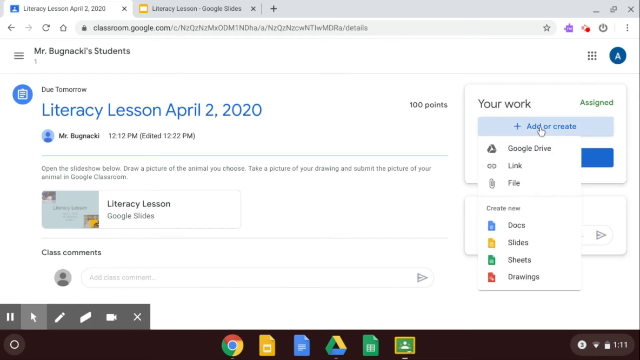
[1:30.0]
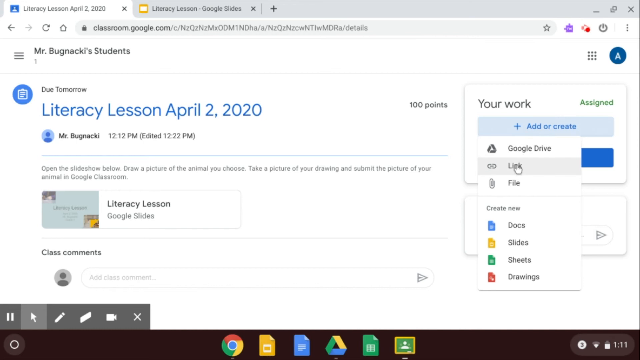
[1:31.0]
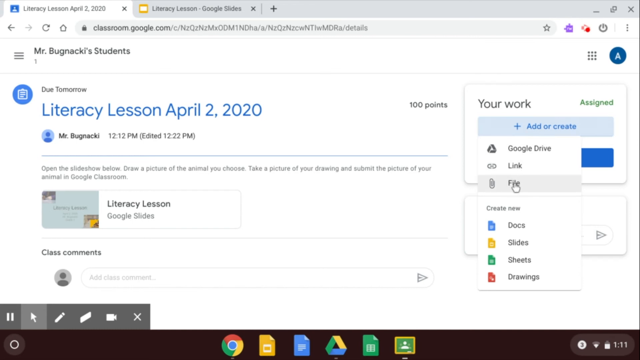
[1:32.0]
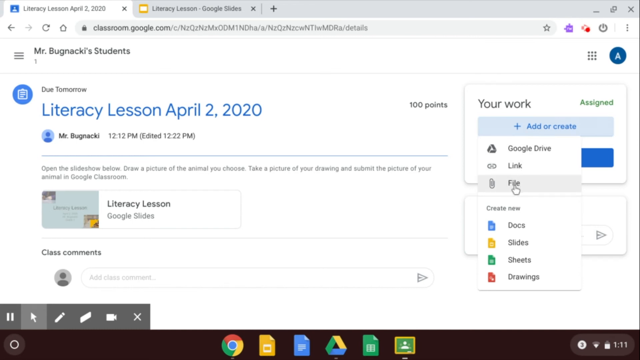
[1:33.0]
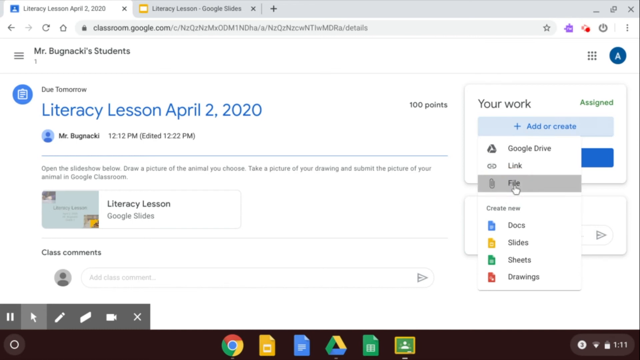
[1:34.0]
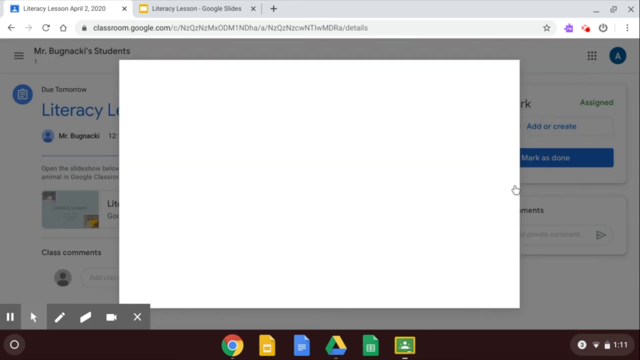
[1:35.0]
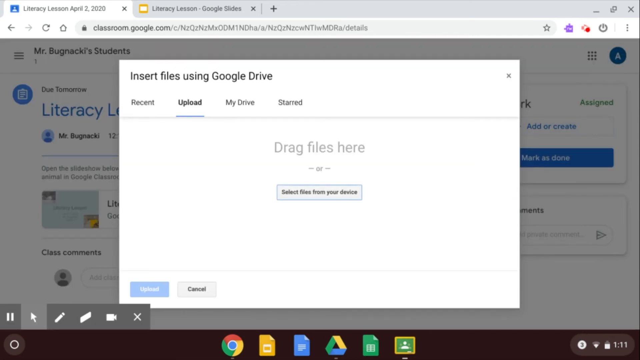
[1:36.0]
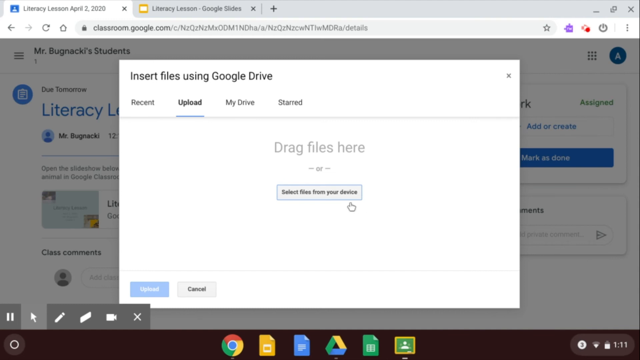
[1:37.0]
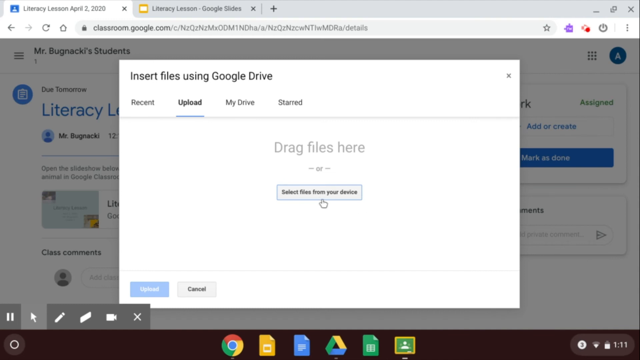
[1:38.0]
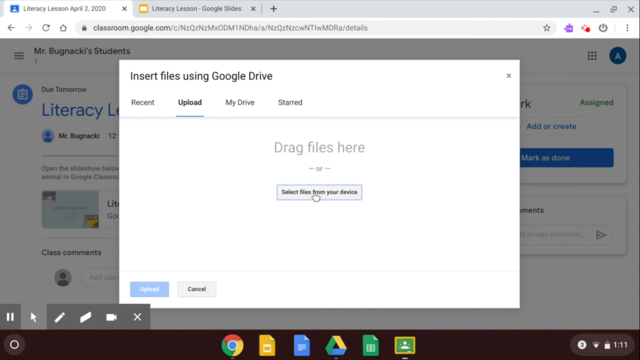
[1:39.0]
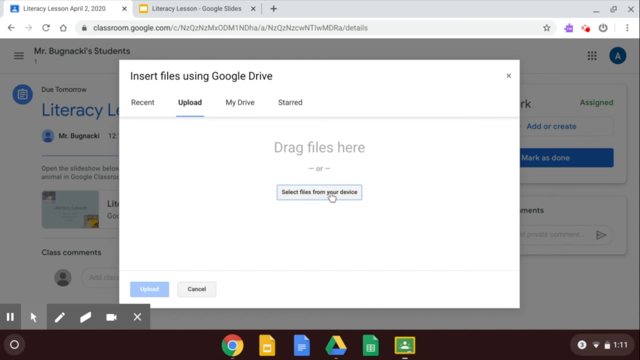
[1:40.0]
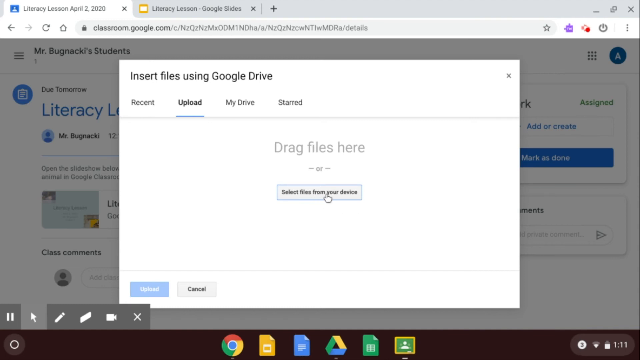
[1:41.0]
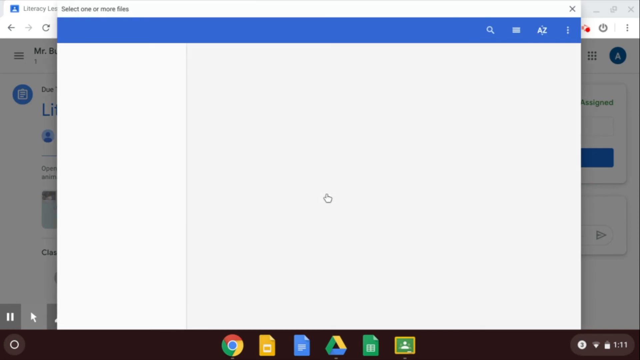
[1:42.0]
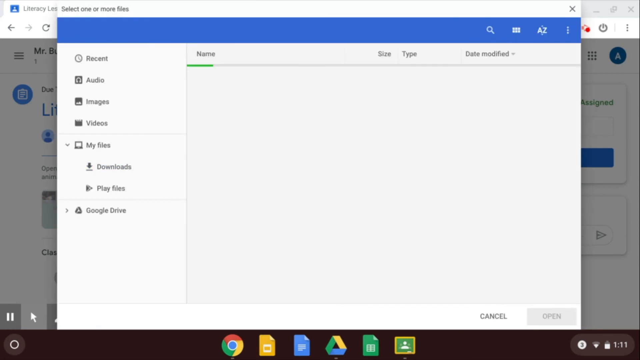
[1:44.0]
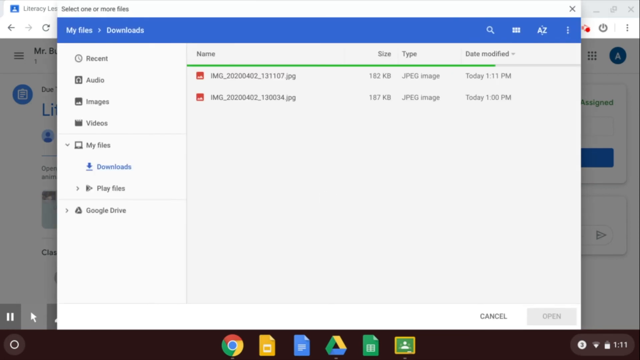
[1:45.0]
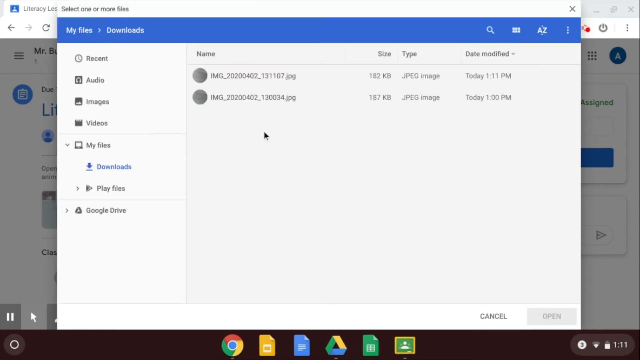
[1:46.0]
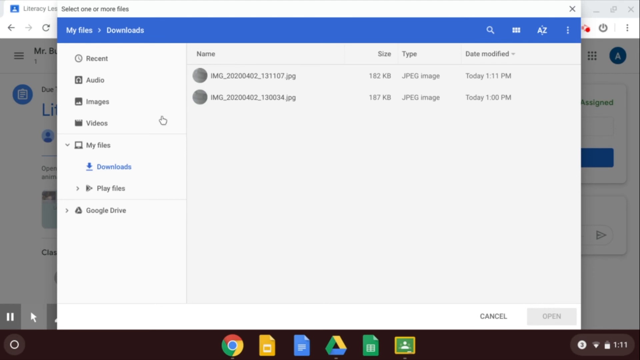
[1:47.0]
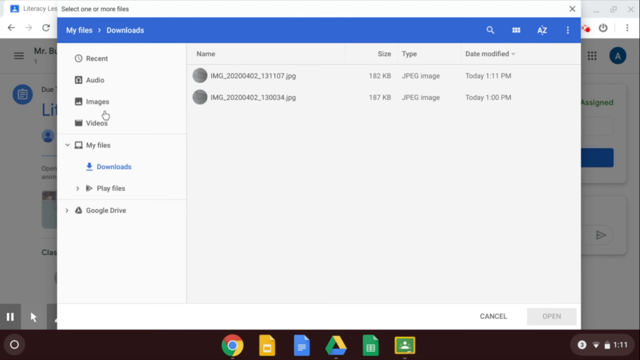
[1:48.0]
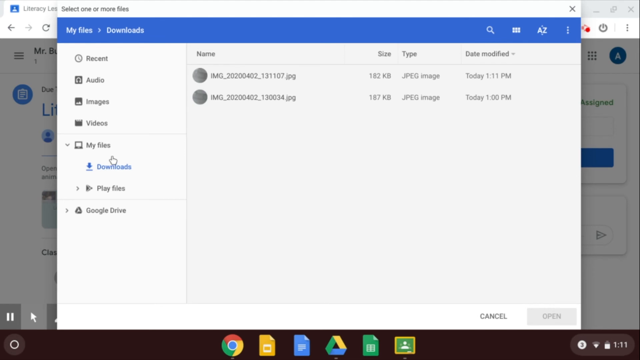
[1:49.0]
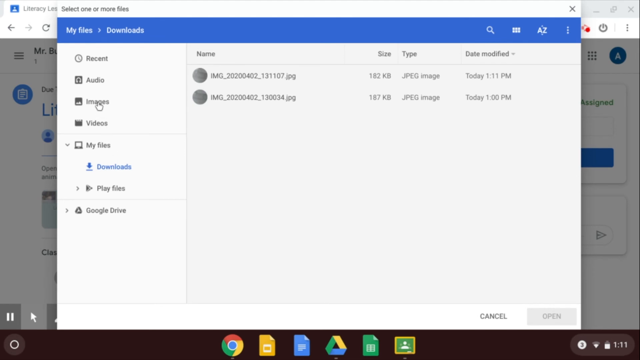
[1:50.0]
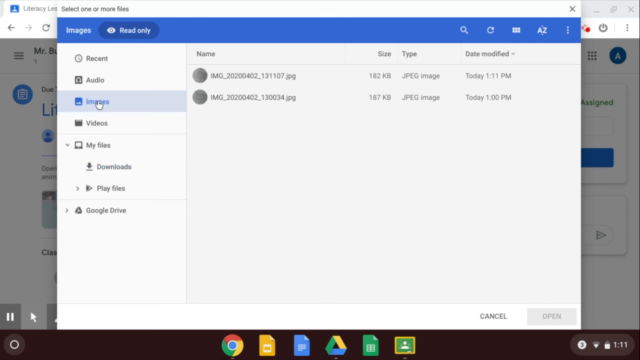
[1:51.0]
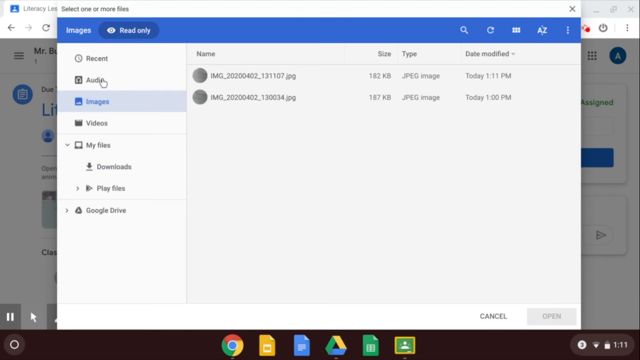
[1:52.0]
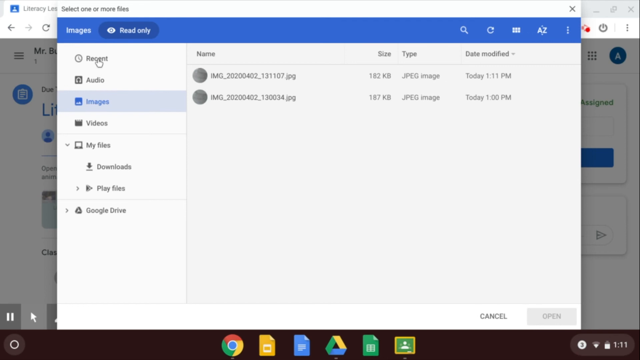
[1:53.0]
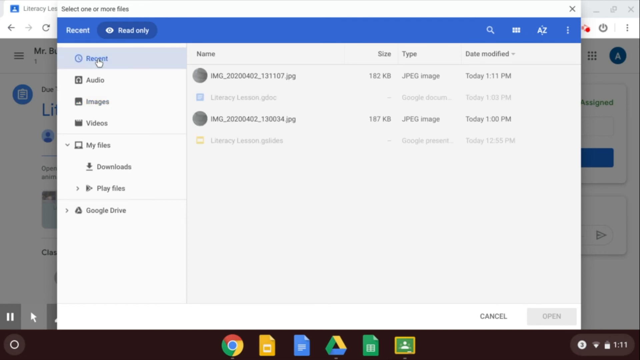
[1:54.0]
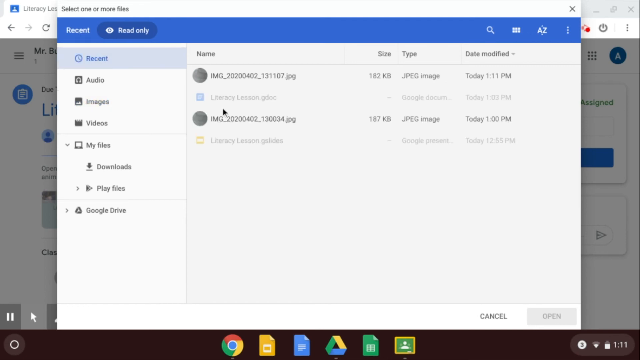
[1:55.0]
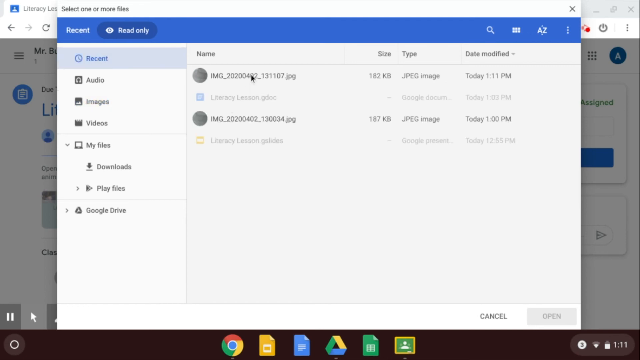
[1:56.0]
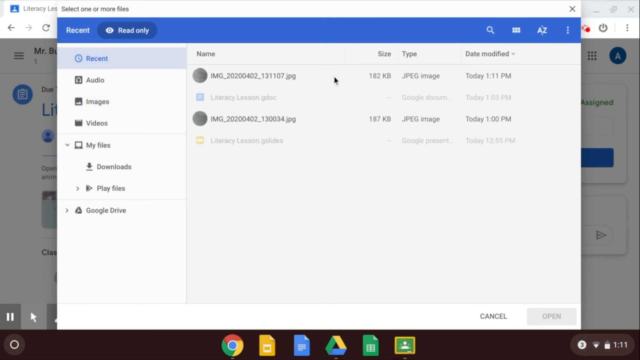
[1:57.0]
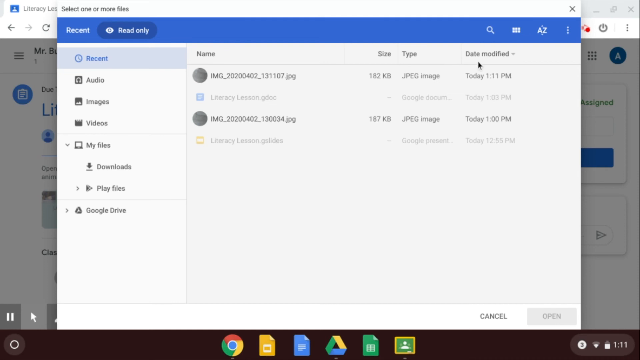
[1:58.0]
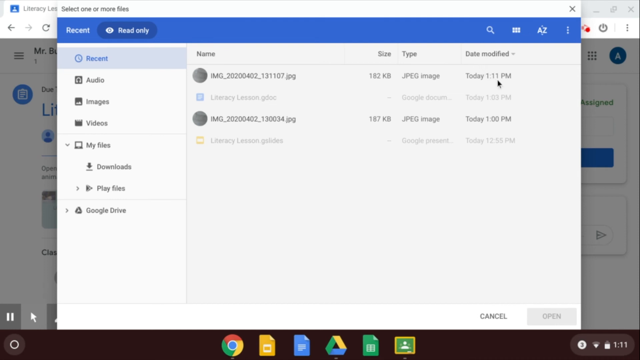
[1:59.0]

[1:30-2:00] The demonstrator shows how to add pictures just taken with the Chromebook camera, clicking the far-right icon that has a plus sign and reads "add or create." The drop-down menu lists "google drive," "link," and "file," along with options to create new documents, slides, sheets, and drawings. The demonstrator clicks on "file," and a page in English pops up. He clicks on "drag files here," and image files appear on the page. He then clicks on images to show the image just taken; audio files, images and videos from the Chromebook are also available. He clicks on the image of the tiger taken that day.